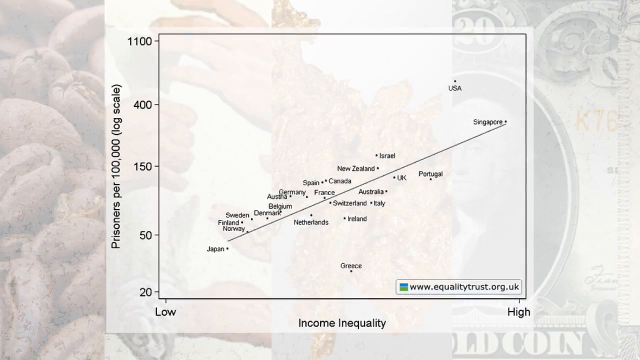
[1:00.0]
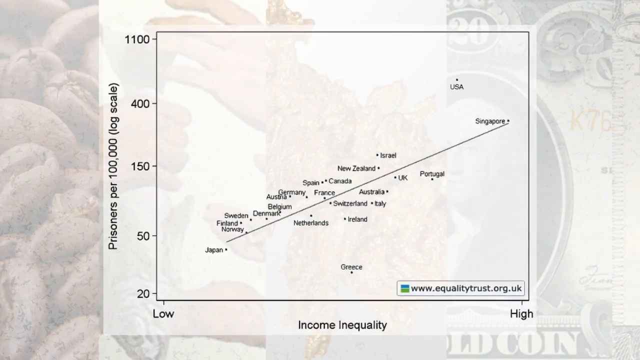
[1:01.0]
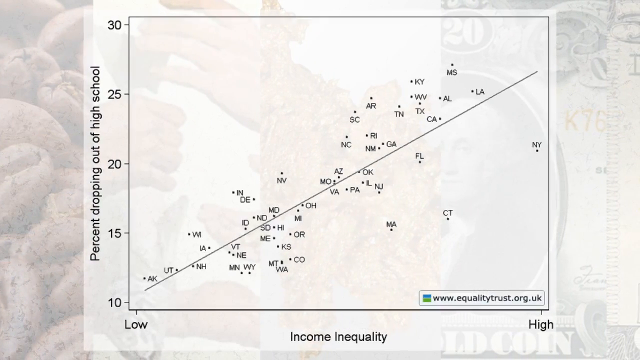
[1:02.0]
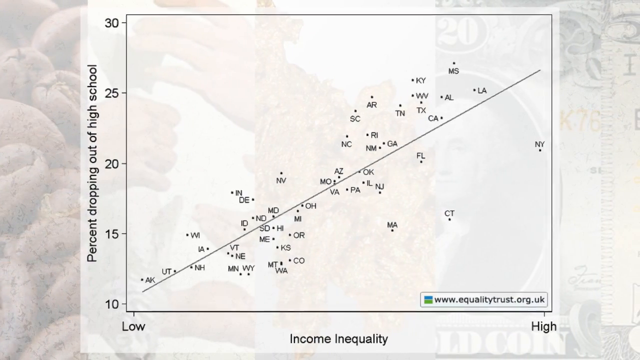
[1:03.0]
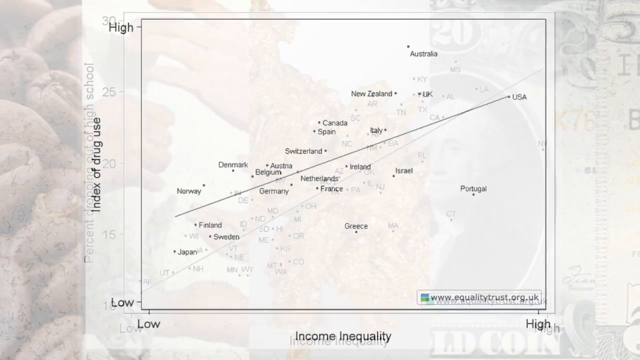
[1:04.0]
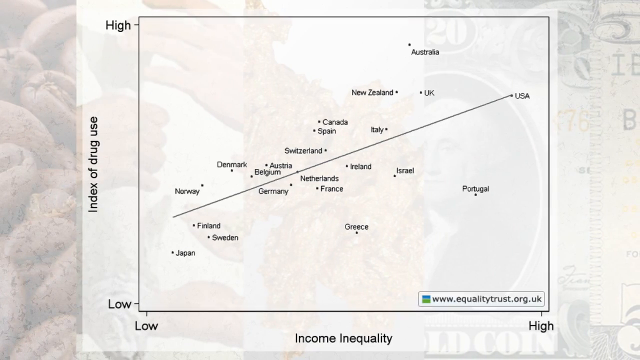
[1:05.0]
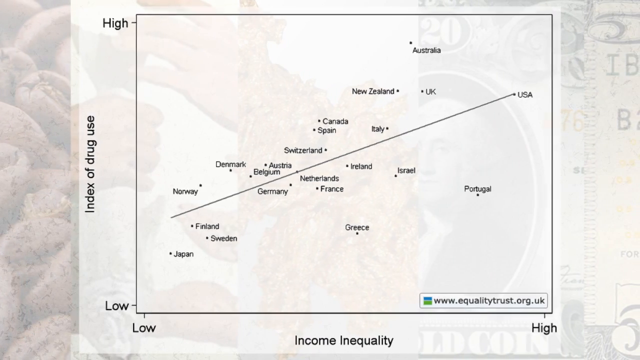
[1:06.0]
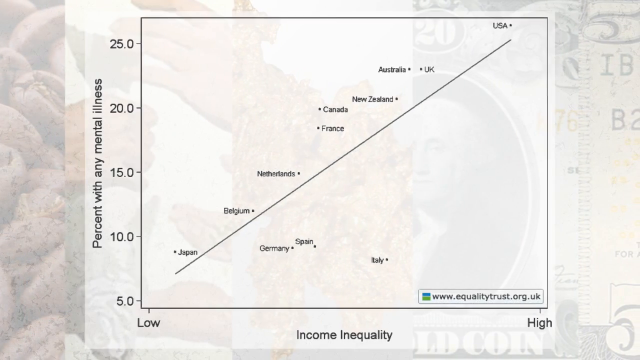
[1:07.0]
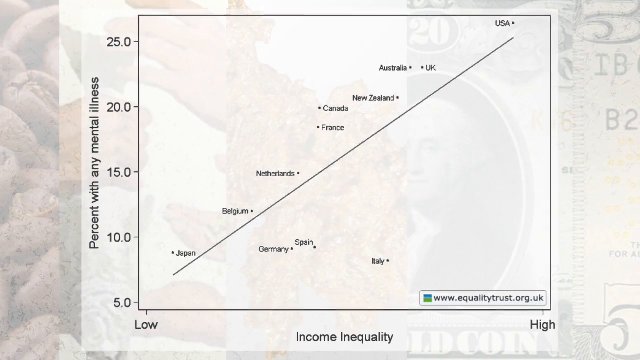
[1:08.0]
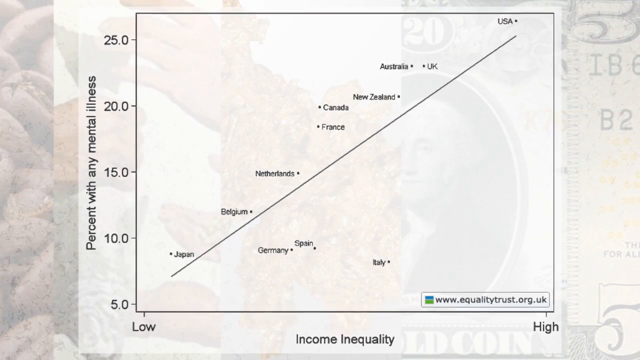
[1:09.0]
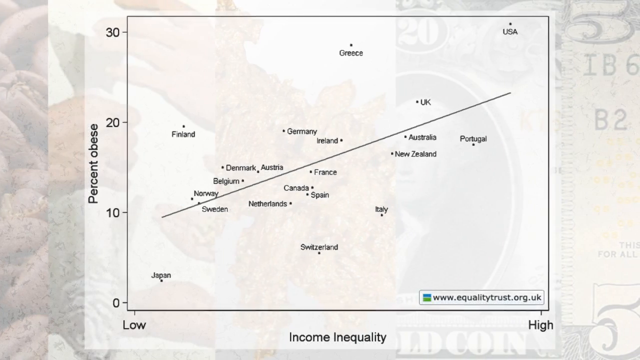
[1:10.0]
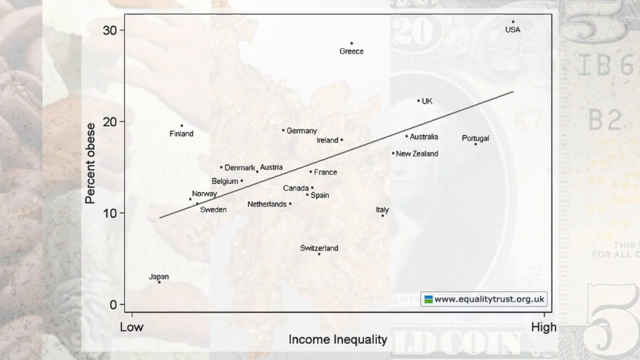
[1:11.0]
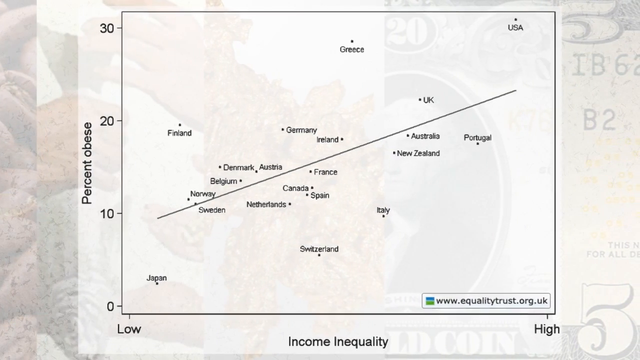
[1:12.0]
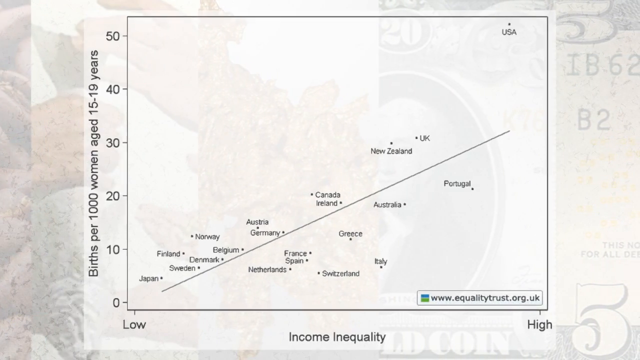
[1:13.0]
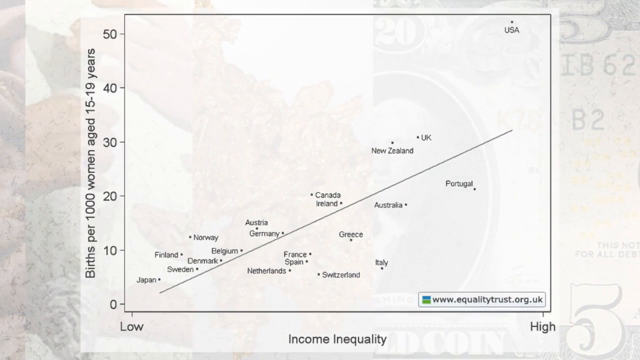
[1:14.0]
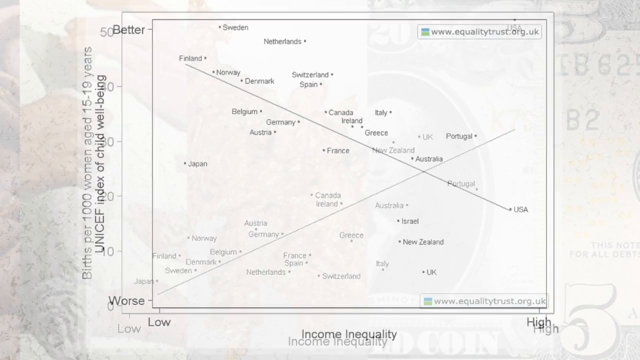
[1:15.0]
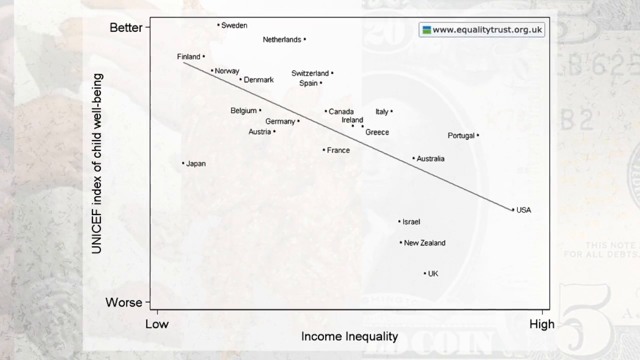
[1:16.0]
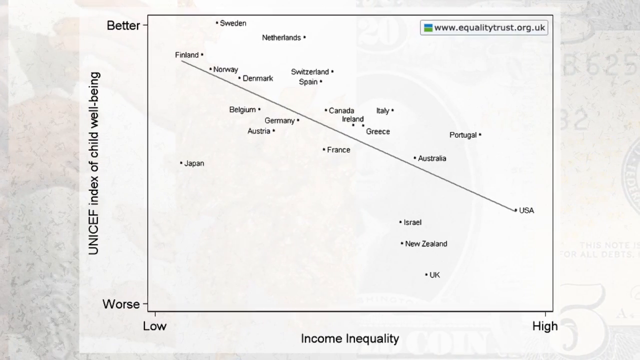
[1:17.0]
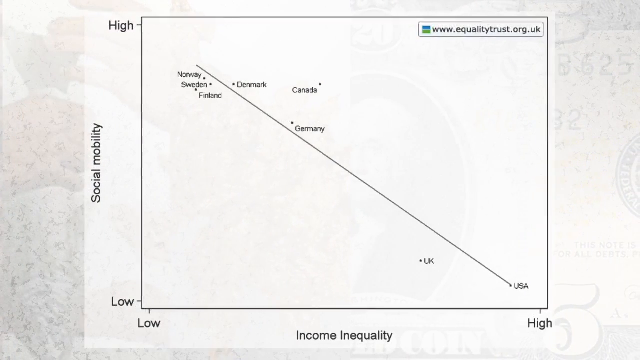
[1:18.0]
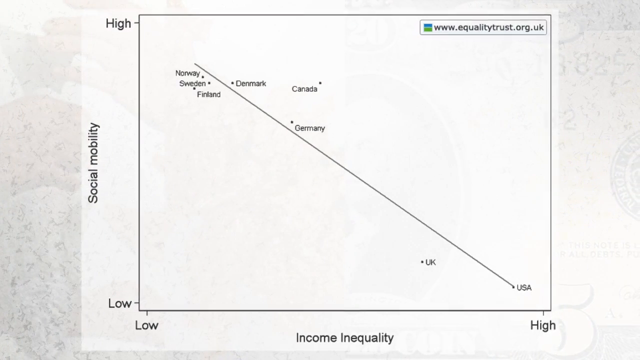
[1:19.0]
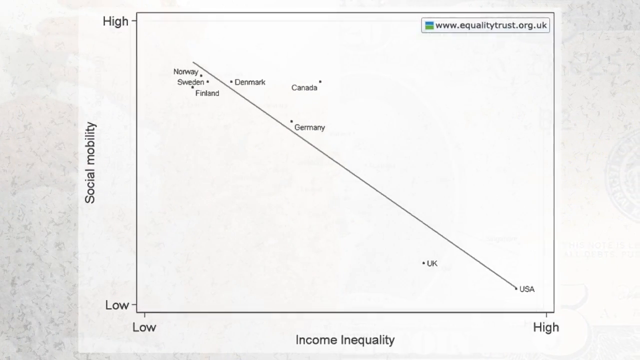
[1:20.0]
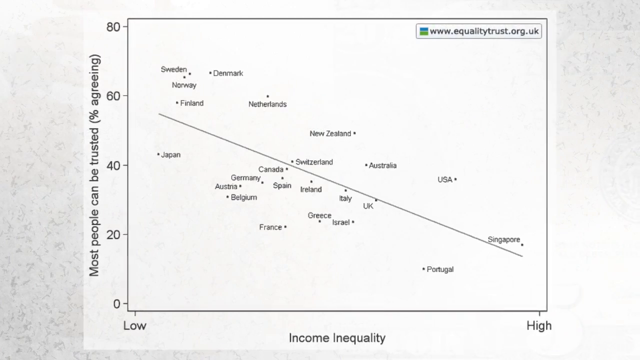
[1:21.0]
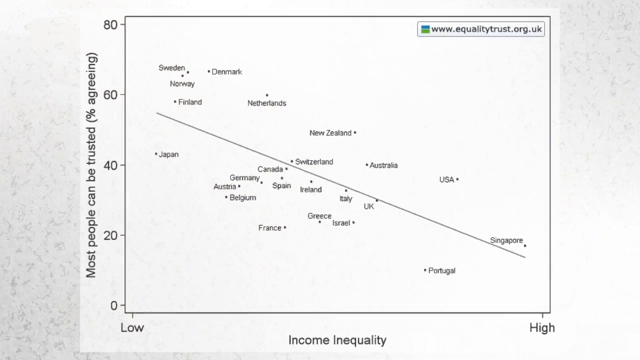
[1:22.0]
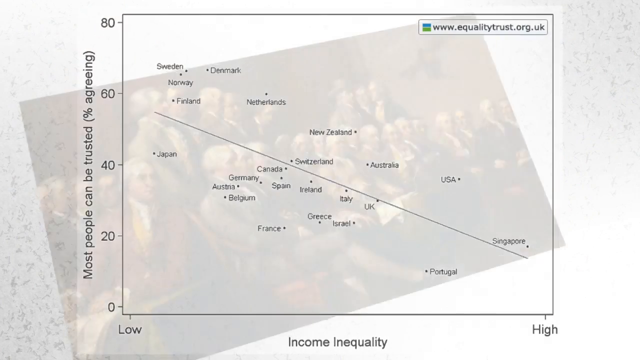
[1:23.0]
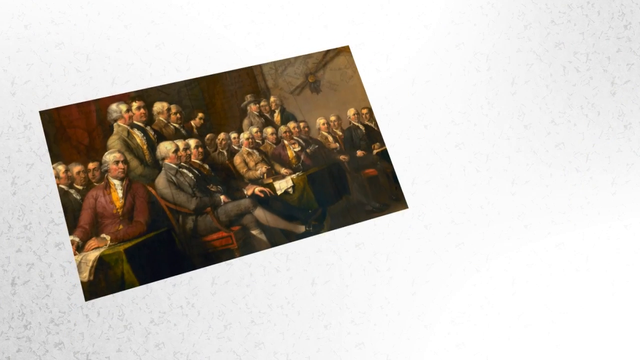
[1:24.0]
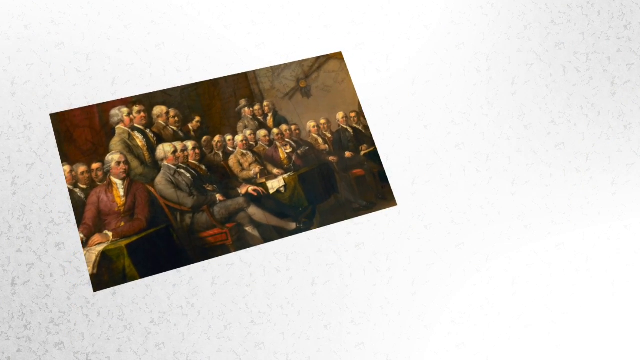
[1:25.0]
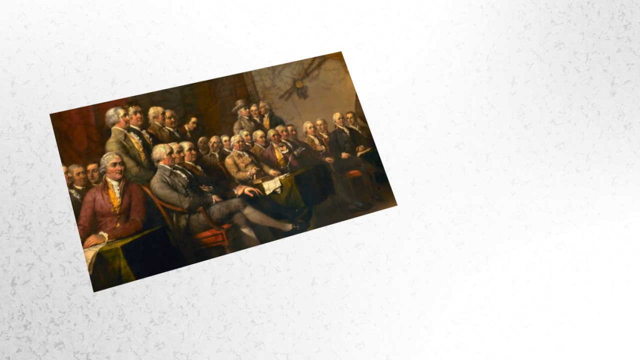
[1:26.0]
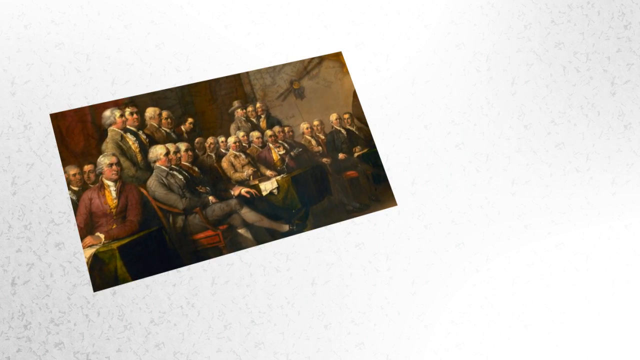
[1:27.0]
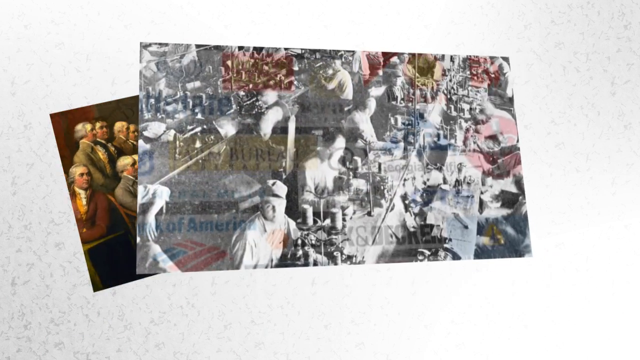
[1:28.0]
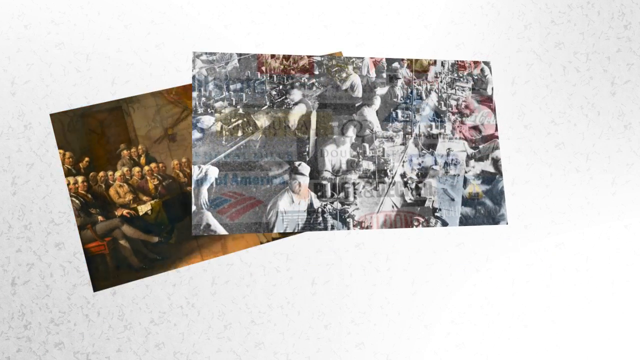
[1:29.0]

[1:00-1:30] Graphs flash by very quickly, measuring different things such as drug use, mental illness, percent of people obese, births to women, society and mobility. Some lines go up and some go down, and they change so rapidly that it is very difficult to tell what they show. Pictures from the time of the revolution follow, along with a more recent black-and-white picture, changing almost as quickly as the graphs, too fast to read any of the information. The second picture, appearing over the one from the revolution, is a black-and-white image from the 1950s.